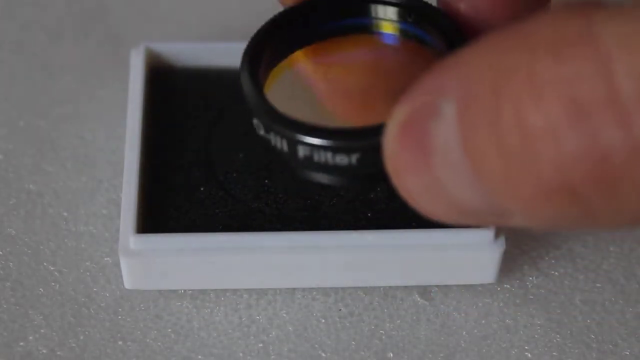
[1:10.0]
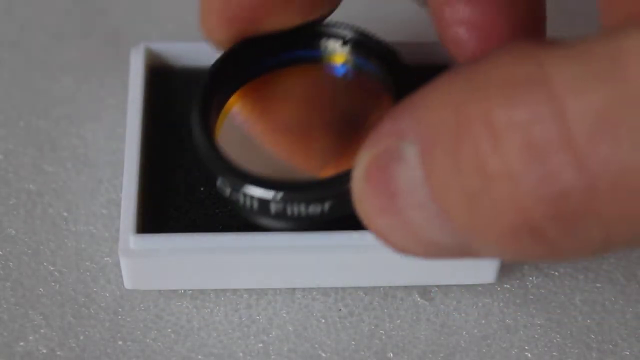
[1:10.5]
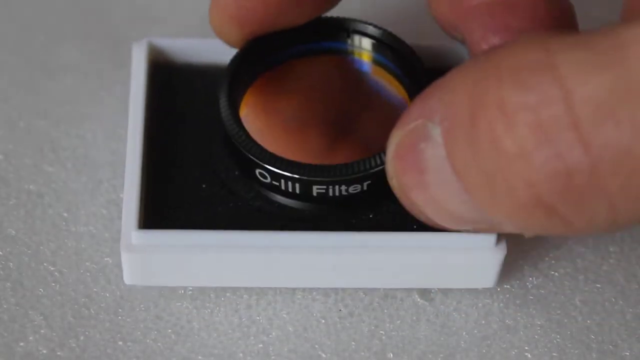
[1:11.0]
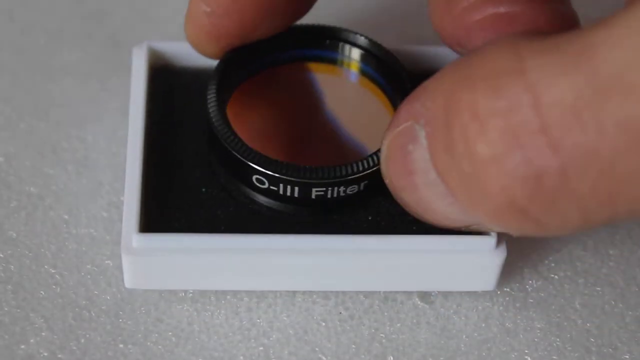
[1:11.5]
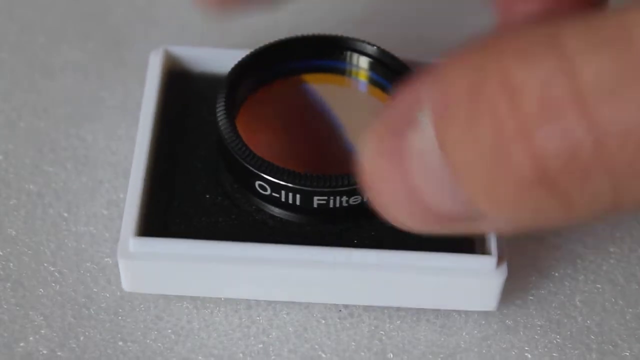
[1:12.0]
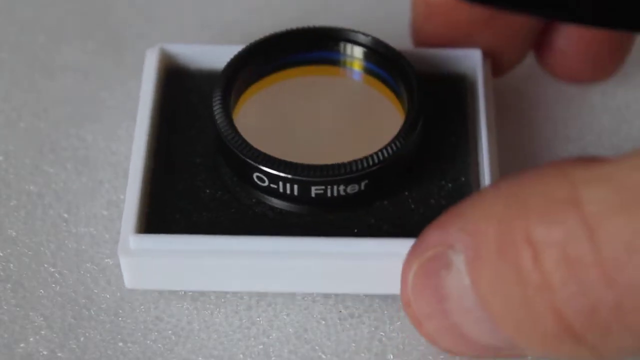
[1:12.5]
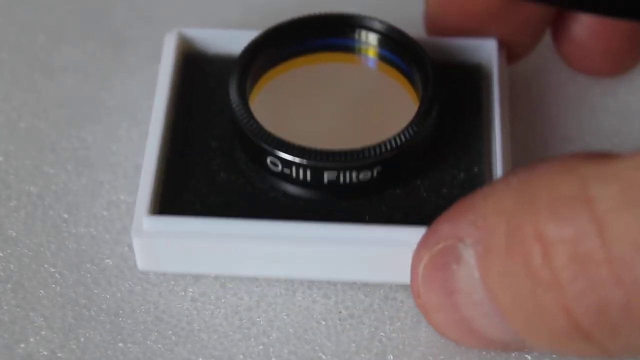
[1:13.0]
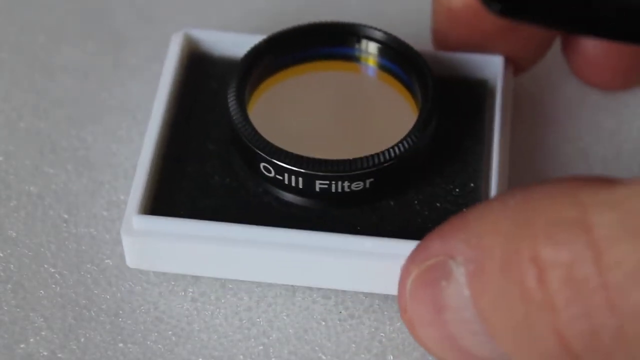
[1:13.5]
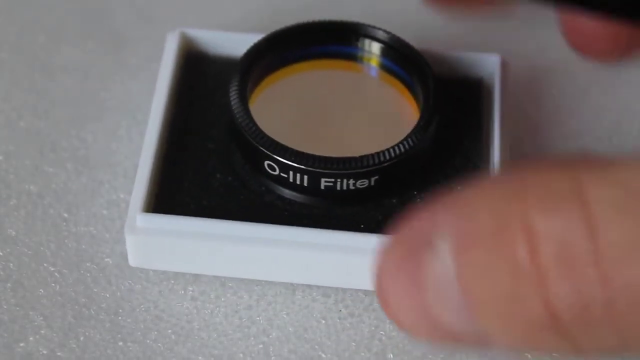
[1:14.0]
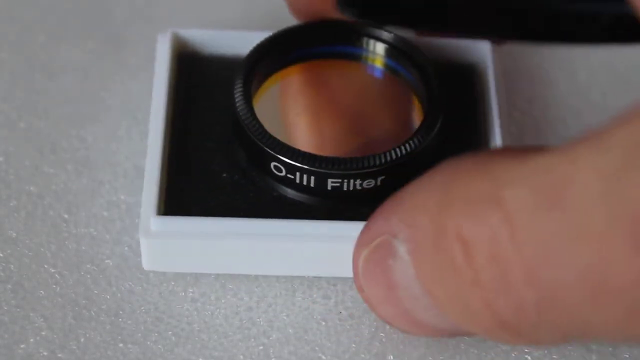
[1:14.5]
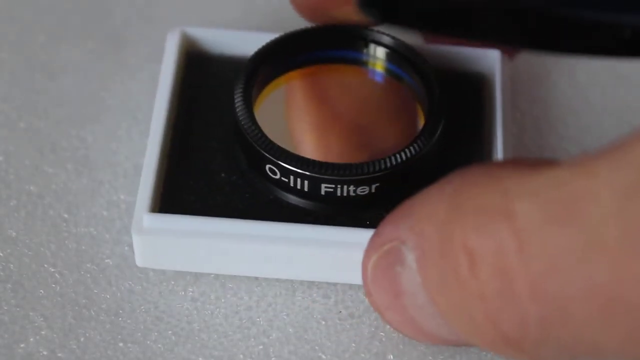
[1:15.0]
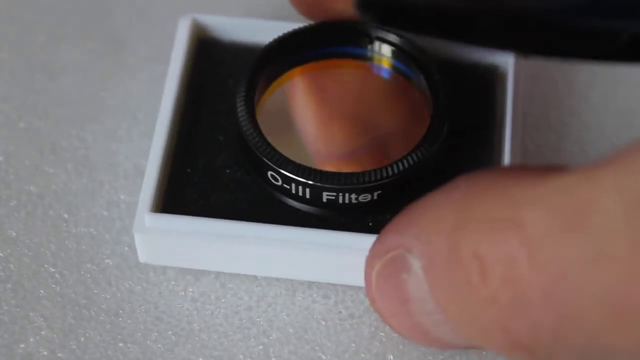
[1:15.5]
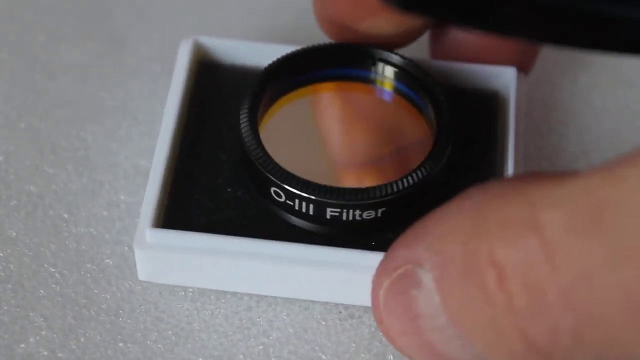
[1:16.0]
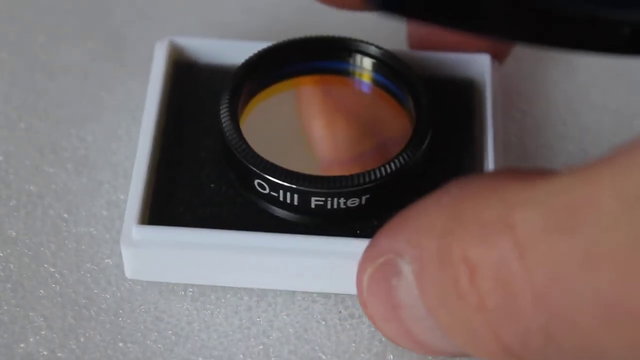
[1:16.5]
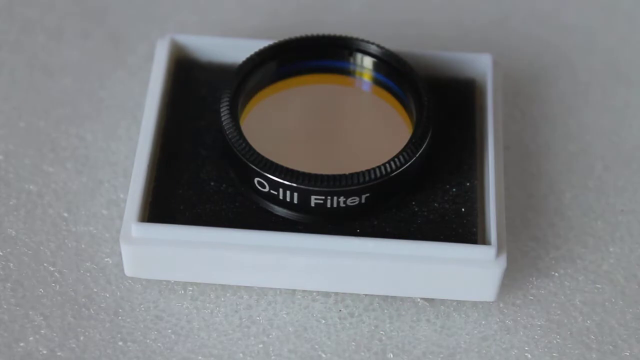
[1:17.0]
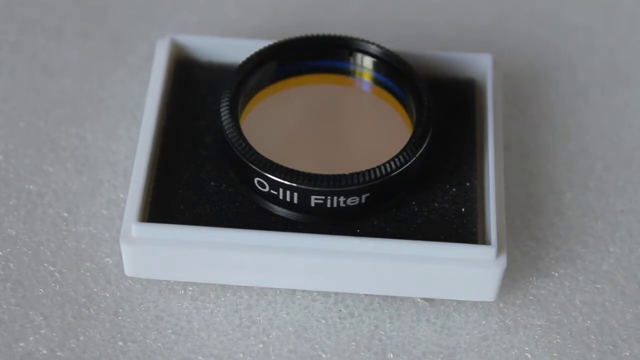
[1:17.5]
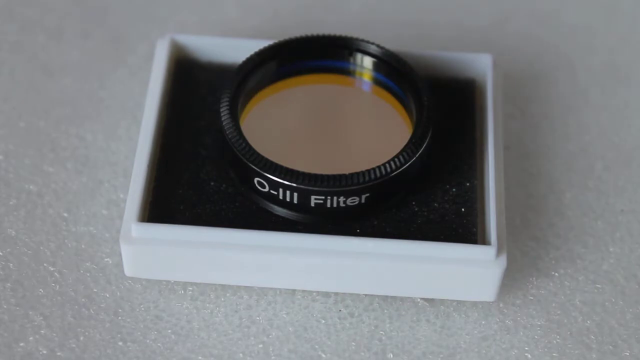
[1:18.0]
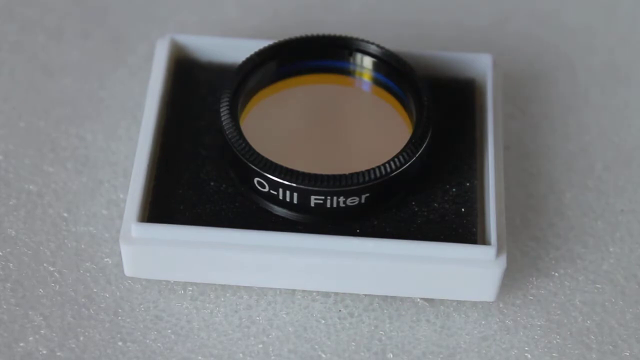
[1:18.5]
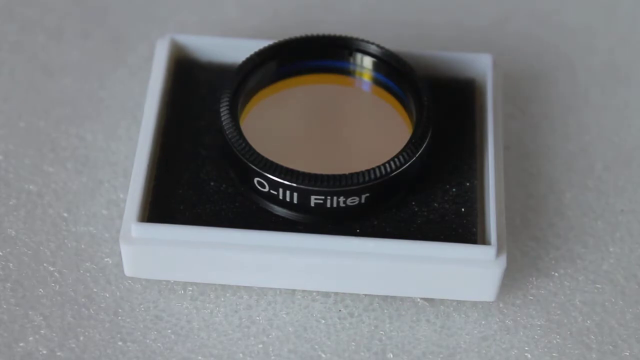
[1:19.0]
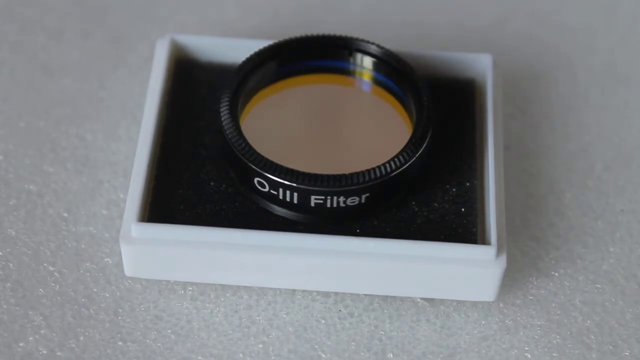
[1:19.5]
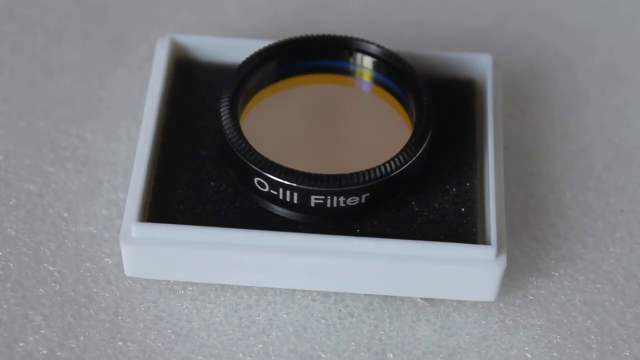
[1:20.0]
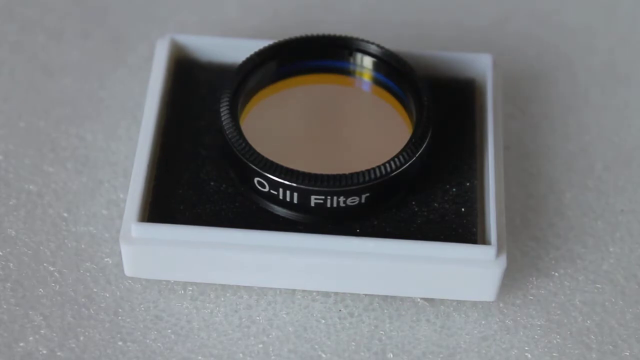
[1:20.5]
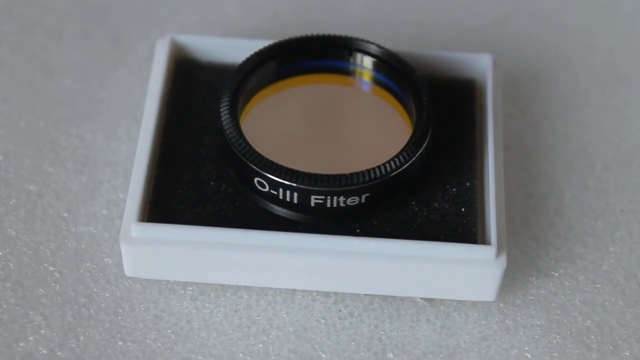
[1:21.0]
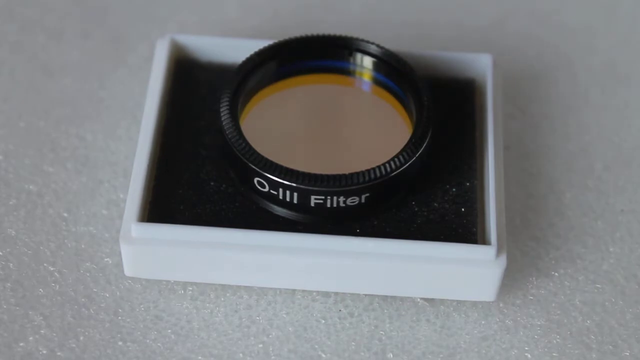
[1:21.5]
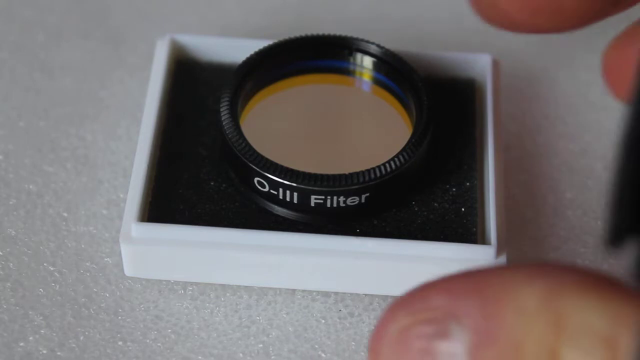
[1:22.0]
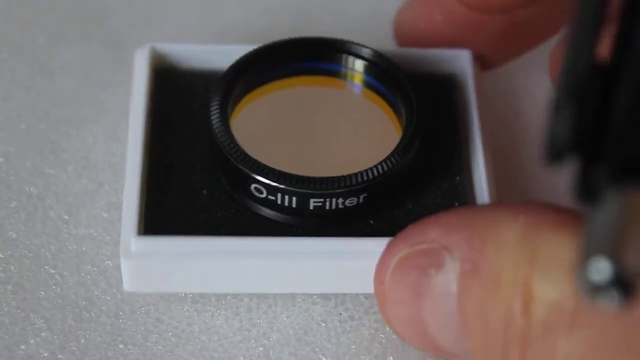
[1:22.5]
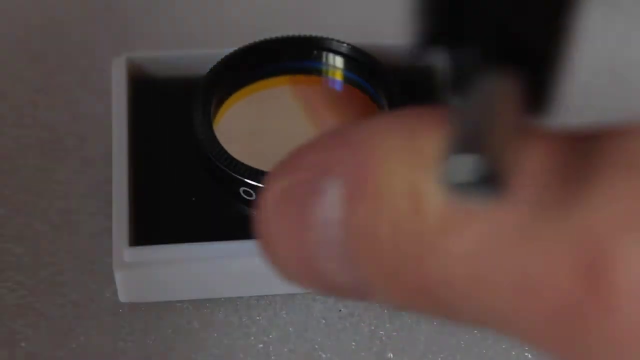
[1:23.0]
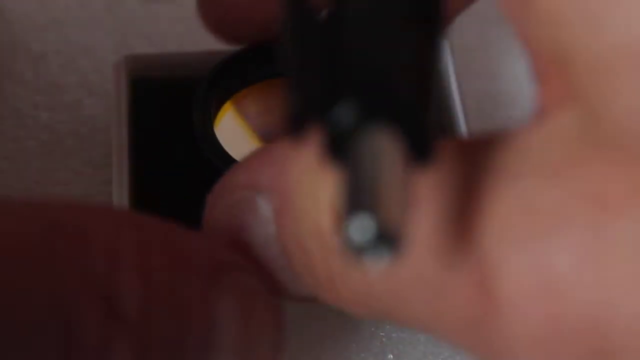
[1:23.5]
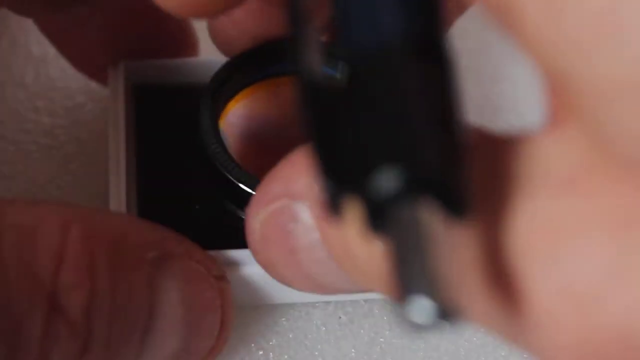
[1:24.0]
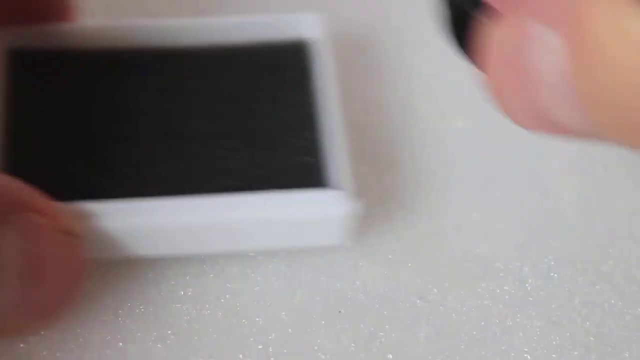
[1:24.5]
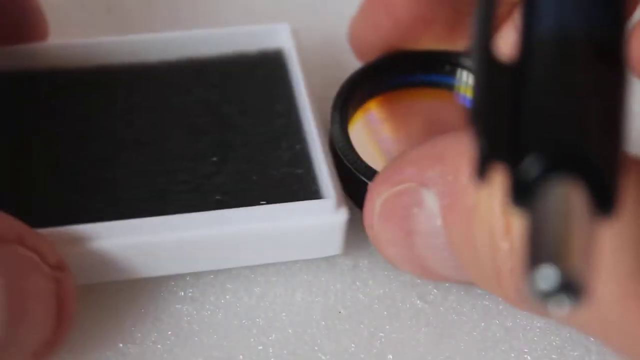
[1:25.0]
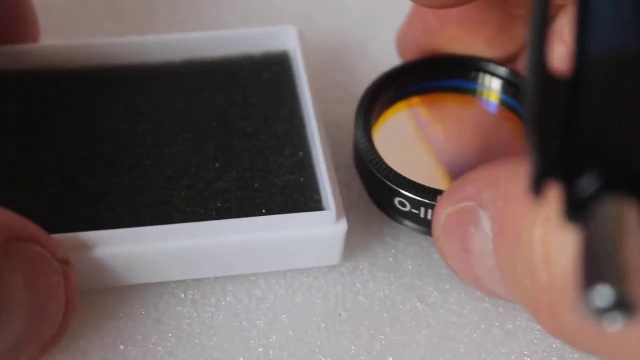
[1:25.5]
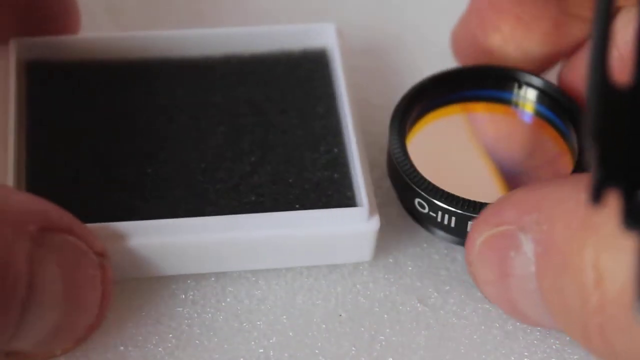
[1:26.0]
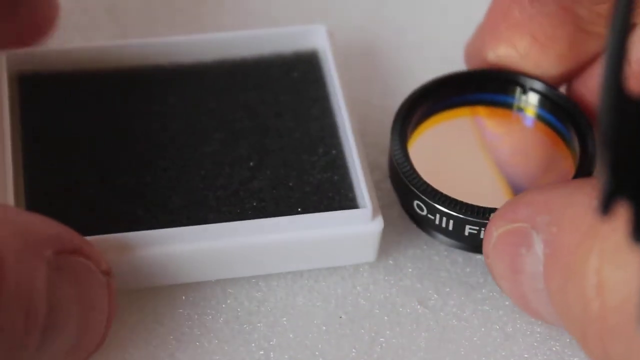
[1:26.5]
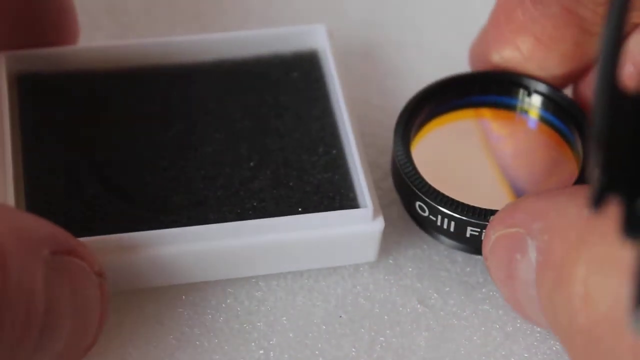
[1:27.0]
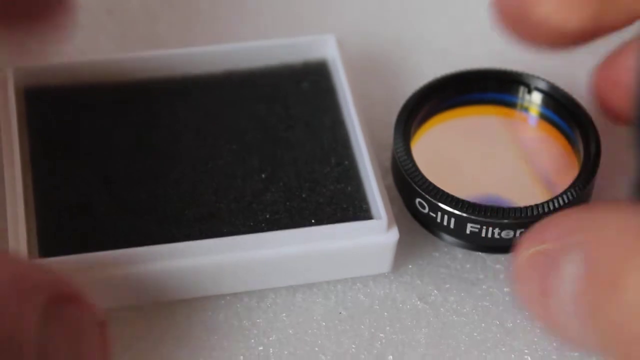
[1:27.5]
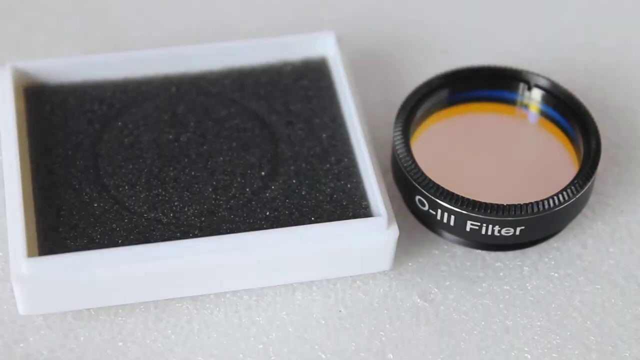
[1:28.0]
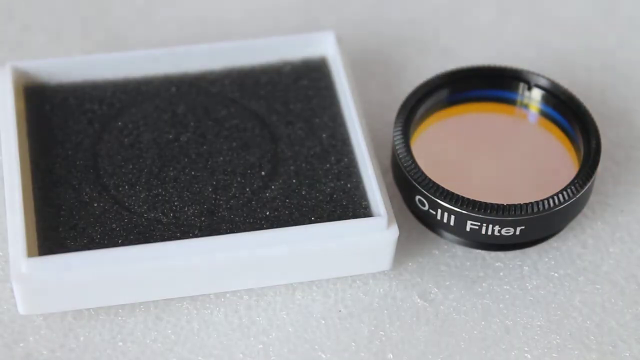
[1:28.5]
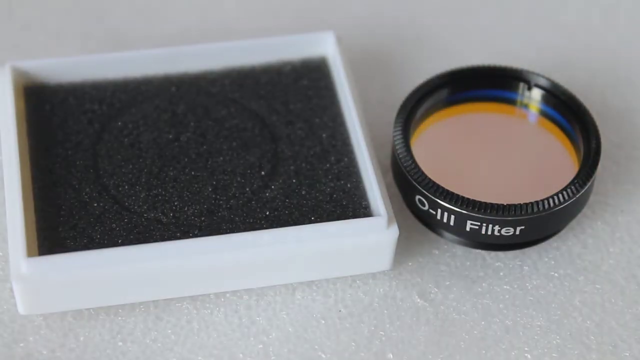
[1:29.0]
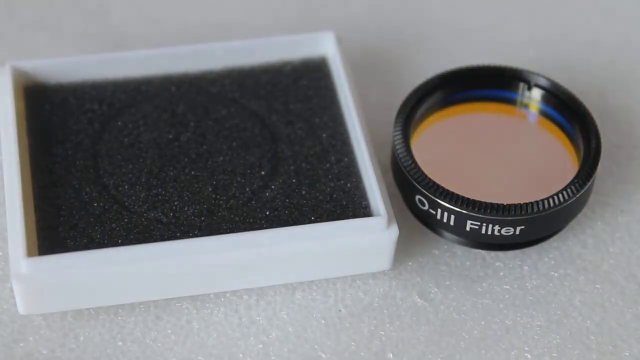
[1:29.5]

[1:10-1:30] The white square and the dark foam squared object are shown, with the lens filter sitting on top of both. The person holds and adjusts the white square and the circular object with their right hand, specifically the index finger and thumb. After making simple adjustments, they move the round object, which looks to be a lens filter, away from the white square and place it next to it on top of a white surface. The person is still holding the pen in their right hand, which is visible. The setting is indoors, with a good amount of natural light making everything clear and visible. The video is rectangular in shape.